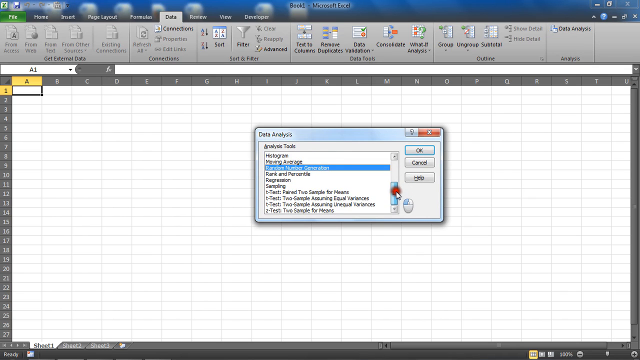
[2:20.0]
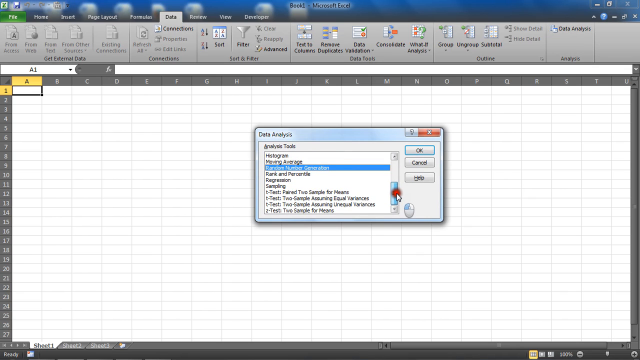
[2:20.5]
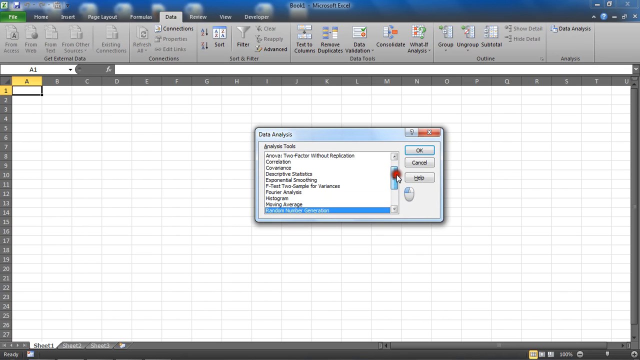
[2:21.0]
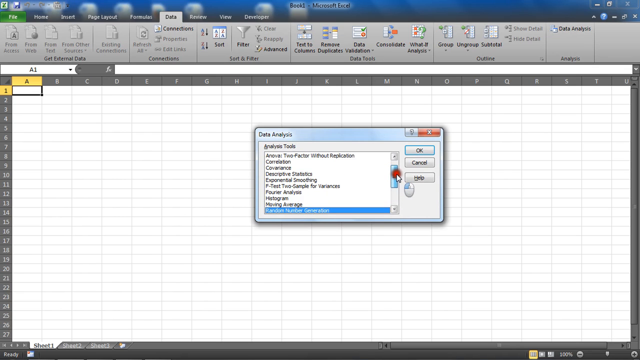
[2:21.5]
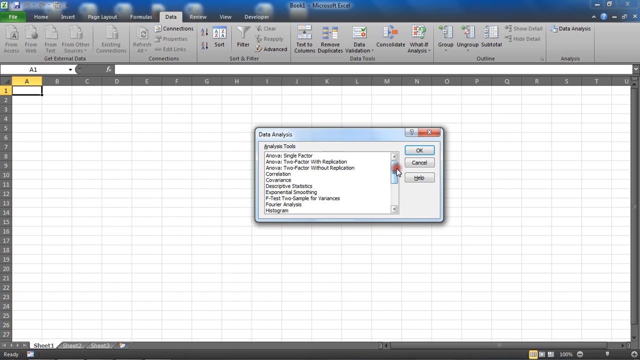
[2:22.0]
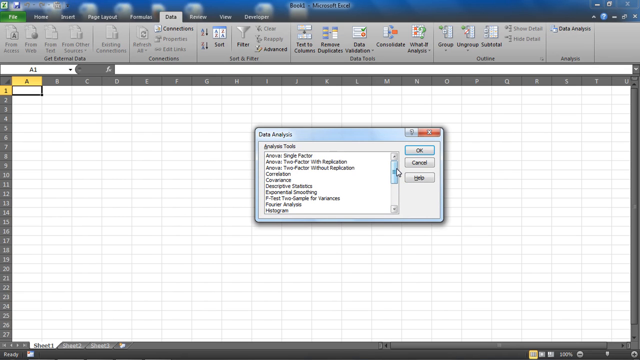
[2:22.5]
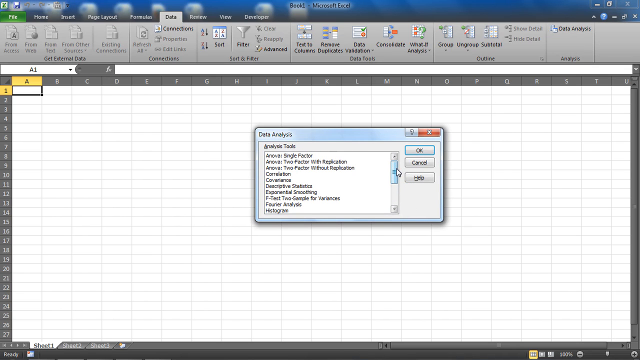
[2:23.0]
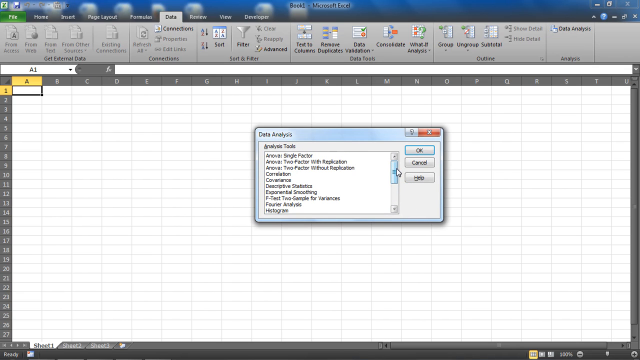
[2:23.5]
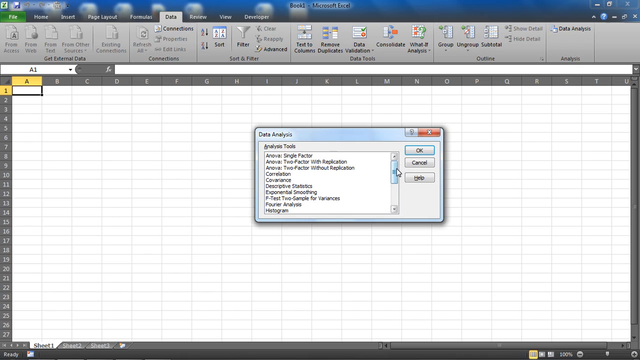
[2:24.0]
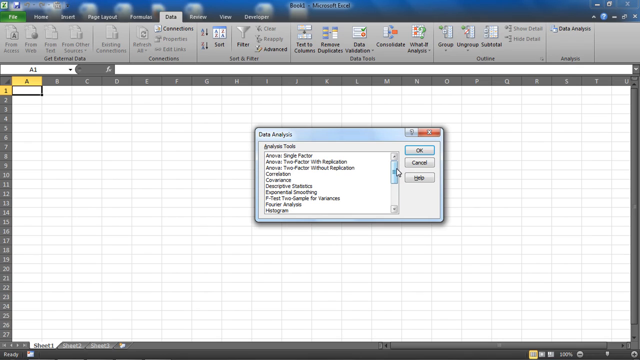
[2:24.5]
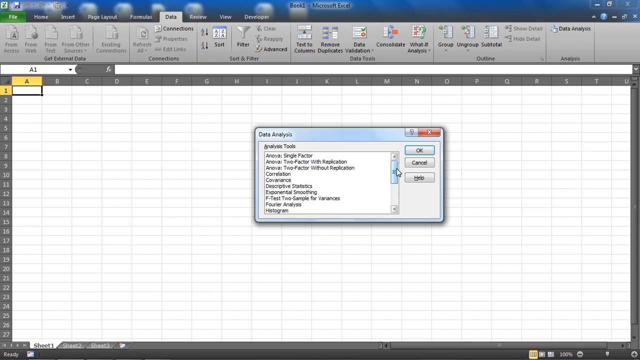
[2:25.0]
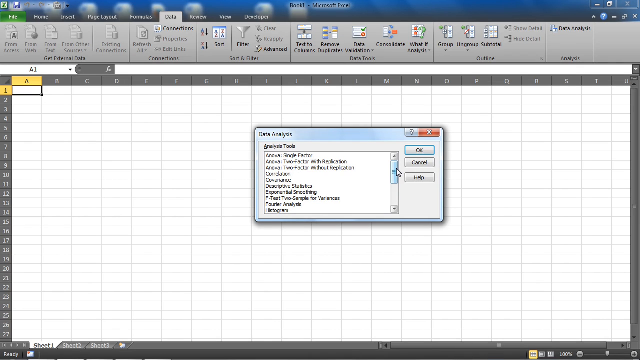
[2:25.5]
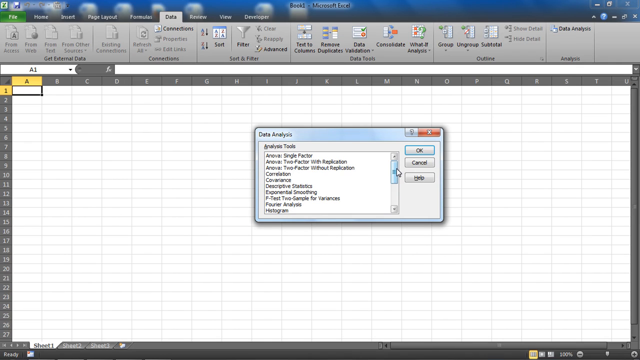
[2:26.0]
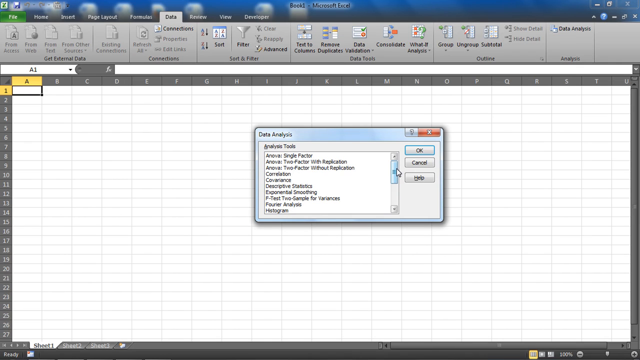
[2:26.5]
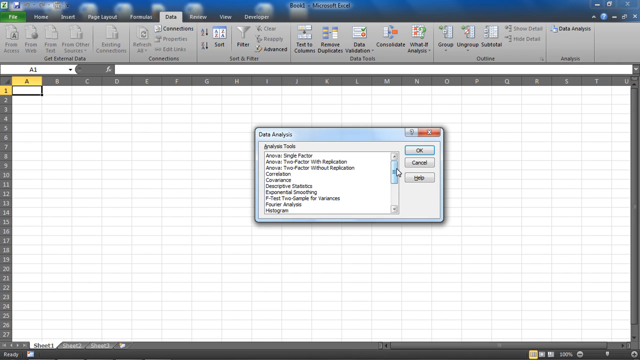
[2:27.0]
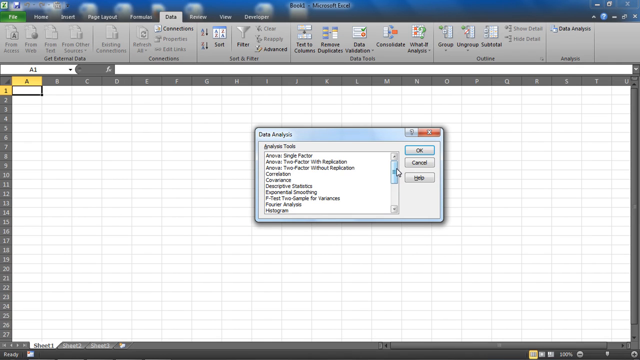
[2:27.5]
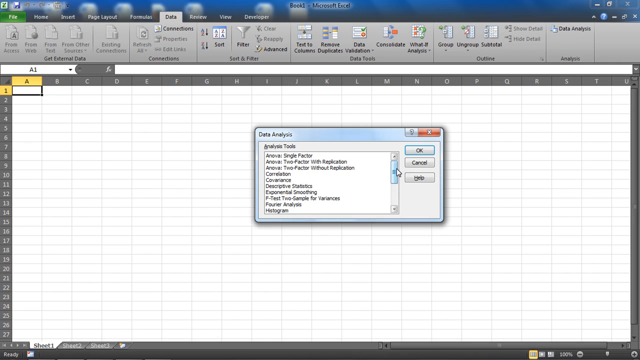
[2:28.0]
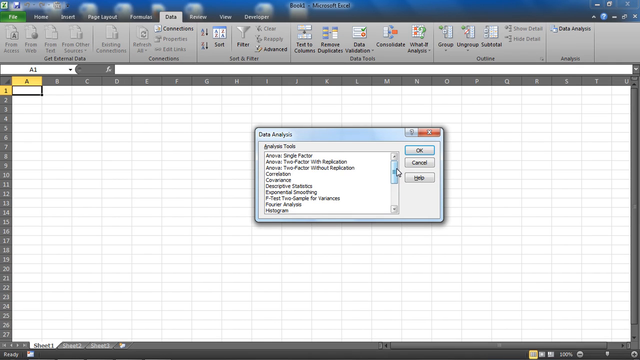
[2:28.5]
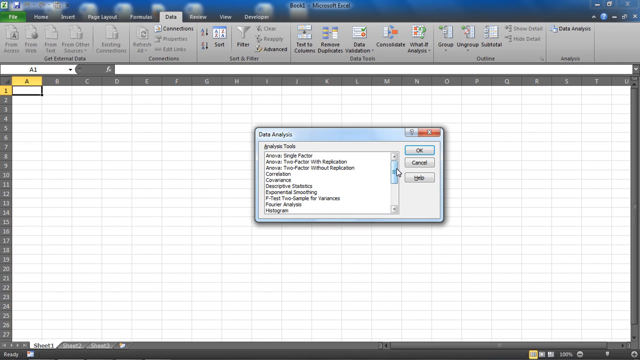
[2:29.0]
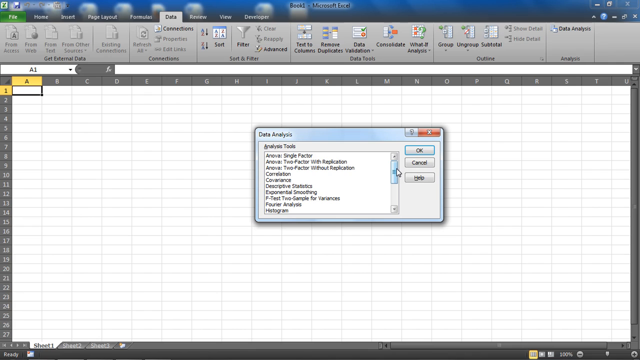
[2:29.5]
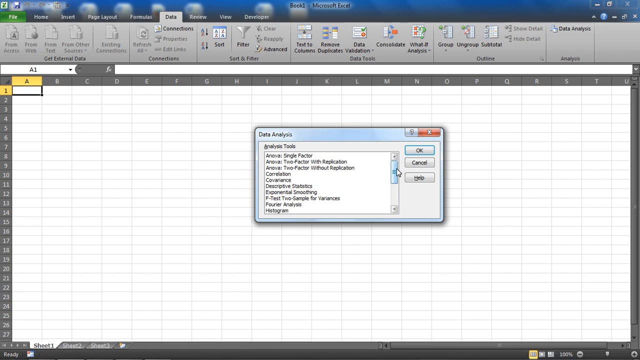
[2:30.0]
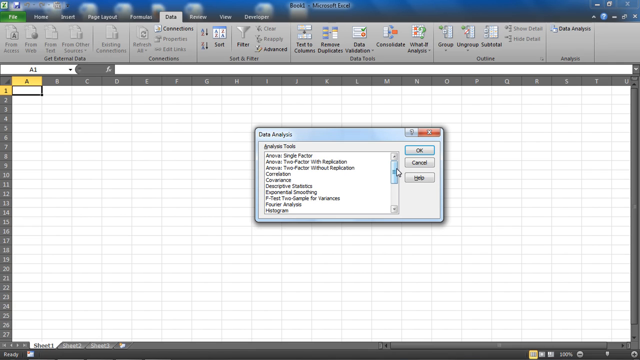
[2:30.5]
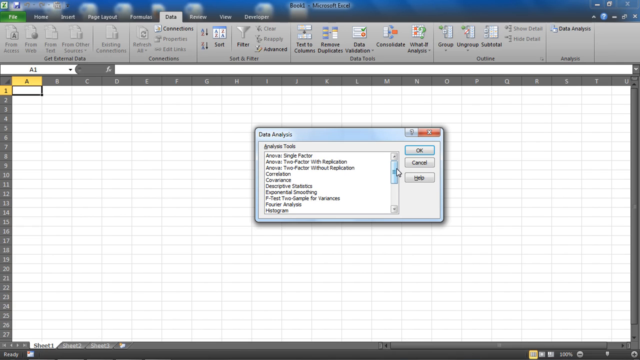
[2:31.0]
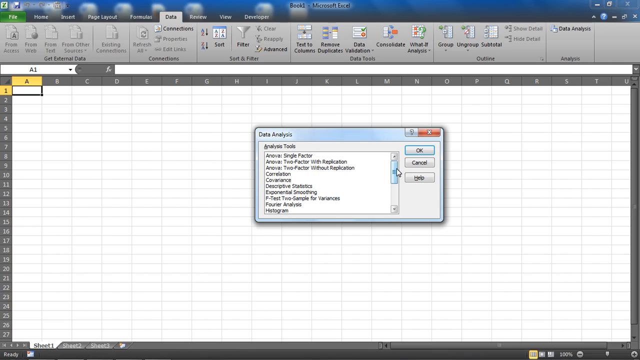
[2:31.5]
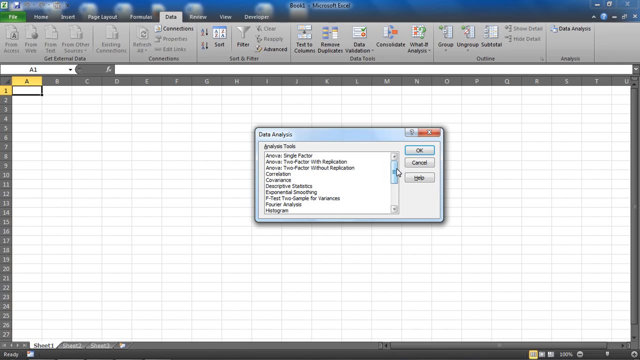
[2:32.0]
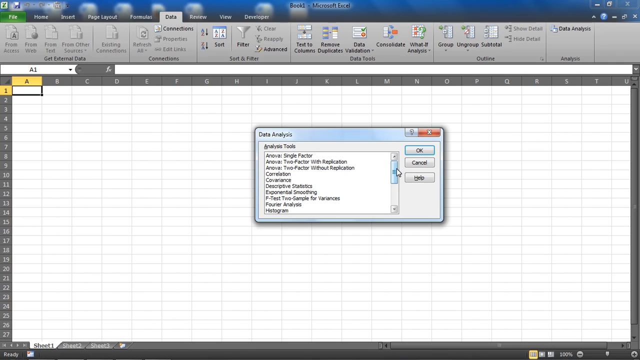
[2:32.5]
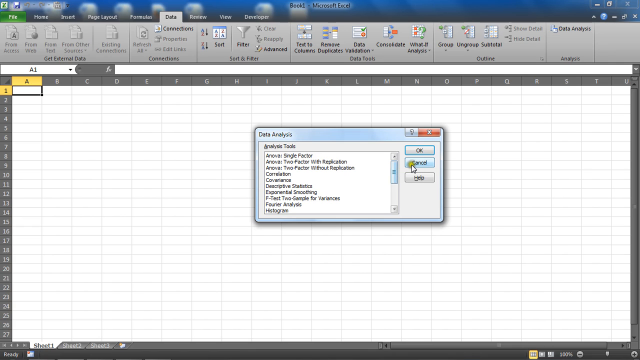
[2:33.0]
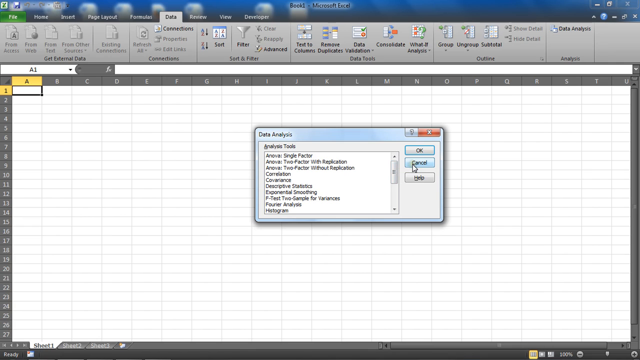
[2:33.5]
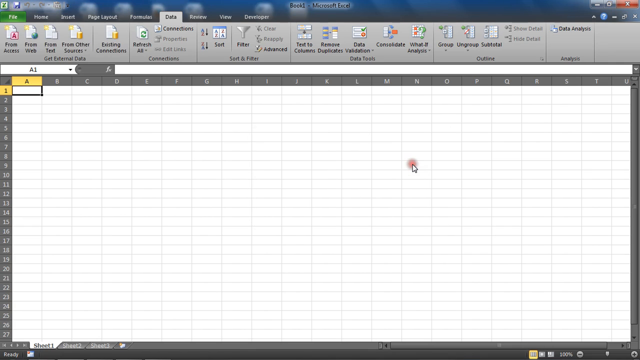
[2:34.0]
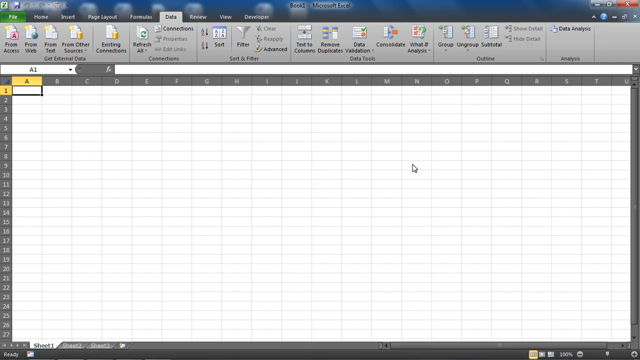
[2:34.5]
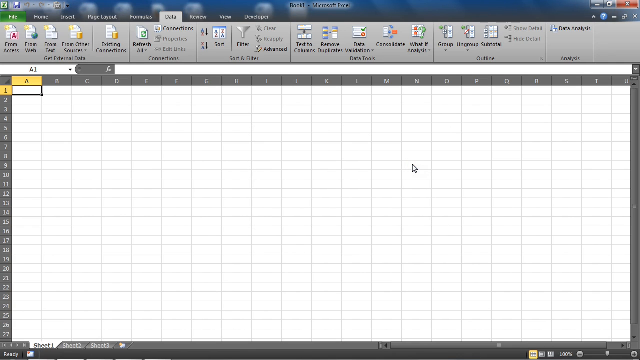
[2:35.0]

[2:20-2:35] The cursor grabs the slider of the scroll bar and moves it up and down, with the small red circle visible as it does, showing the options. It then stops with the scroll bar in the top position, and nothing happens on the screen. The arrow rests near the grab area, then slides slowly to the right and clicks "Cancel", and the whole window disappears without anything within Data Analysis ever being selected. The choices in the list seem to be alphabetized, with the top ones starting with A followed by other letters; apparently one in the middle says "Hologram", though the words are hard to read. The buttons to the right of the list are OK, Cancel, and Help. Nothing is ever typed into the Excel cells.